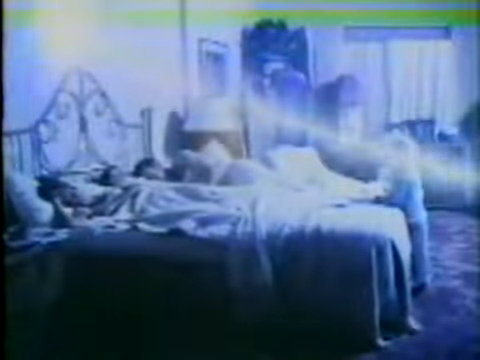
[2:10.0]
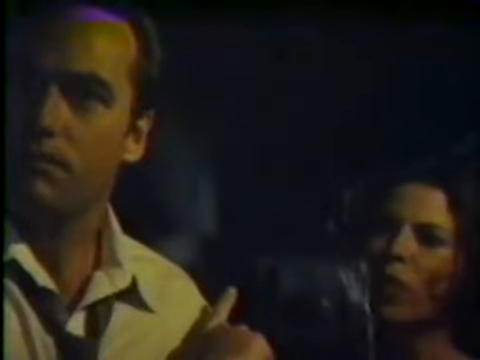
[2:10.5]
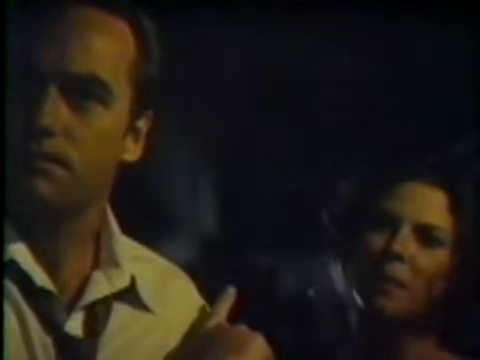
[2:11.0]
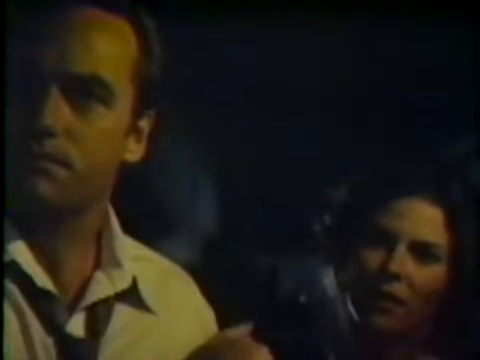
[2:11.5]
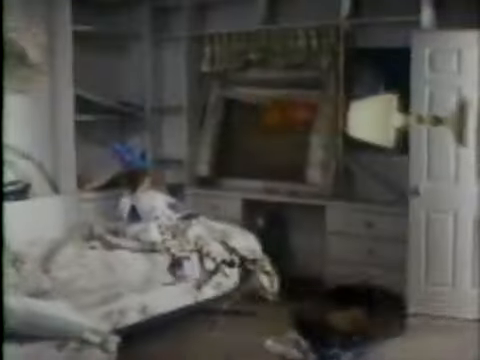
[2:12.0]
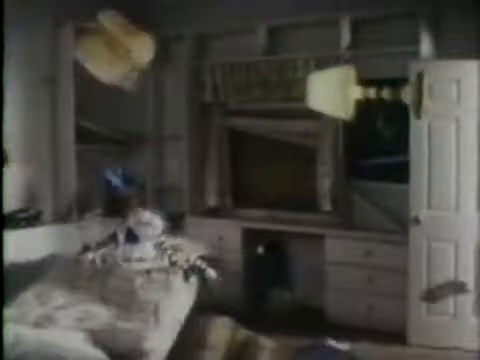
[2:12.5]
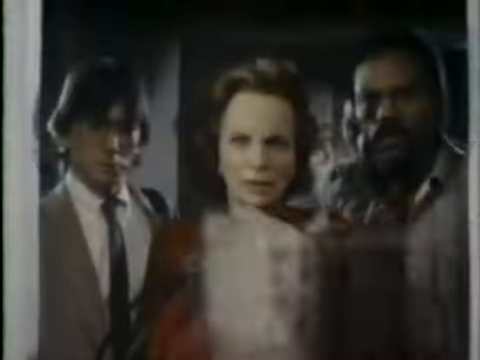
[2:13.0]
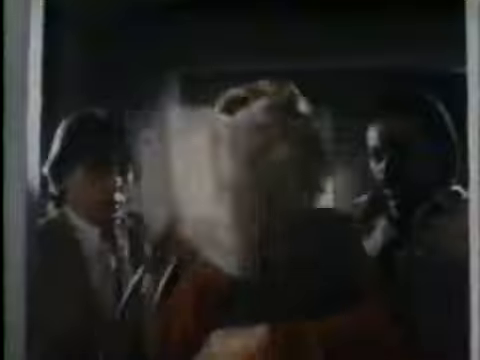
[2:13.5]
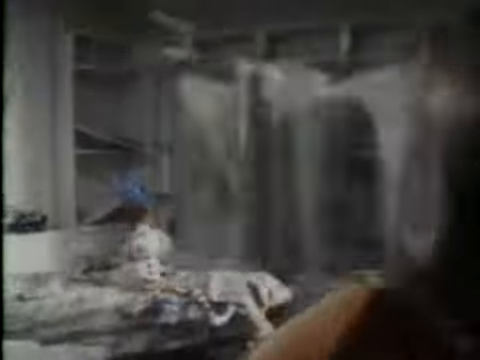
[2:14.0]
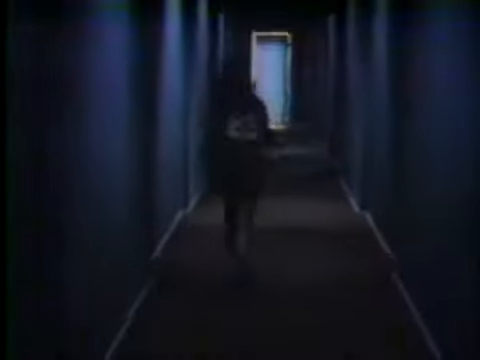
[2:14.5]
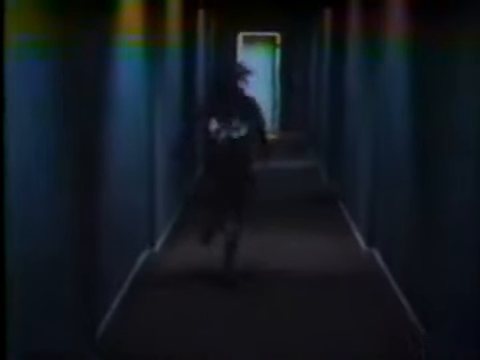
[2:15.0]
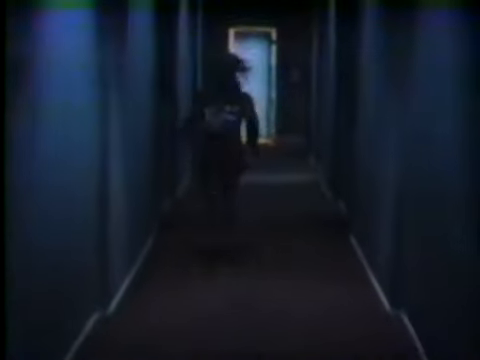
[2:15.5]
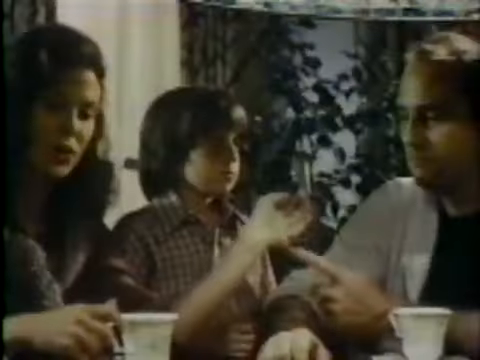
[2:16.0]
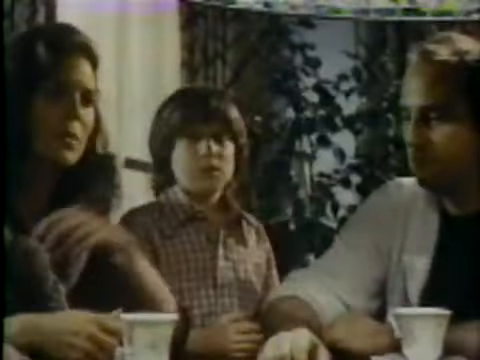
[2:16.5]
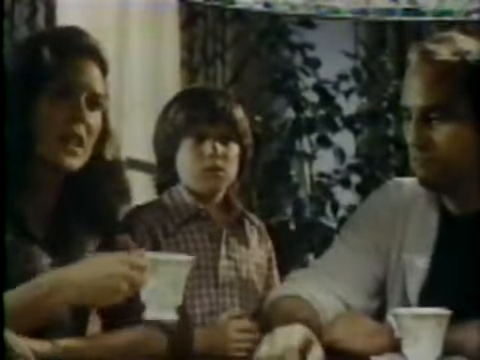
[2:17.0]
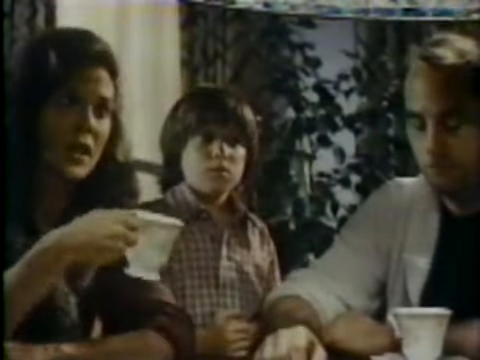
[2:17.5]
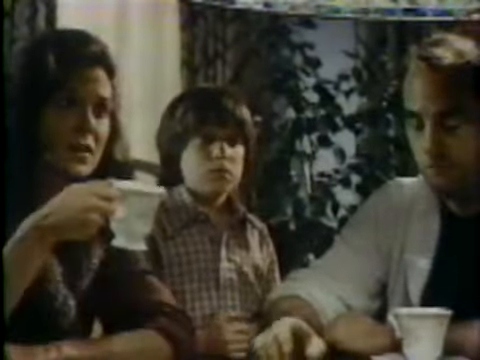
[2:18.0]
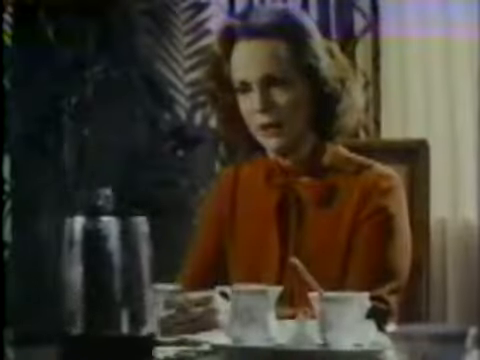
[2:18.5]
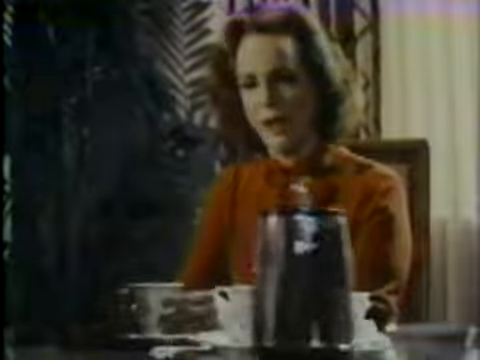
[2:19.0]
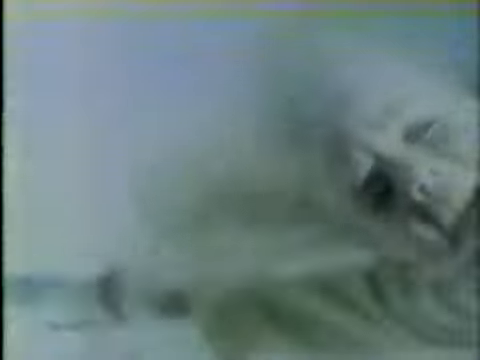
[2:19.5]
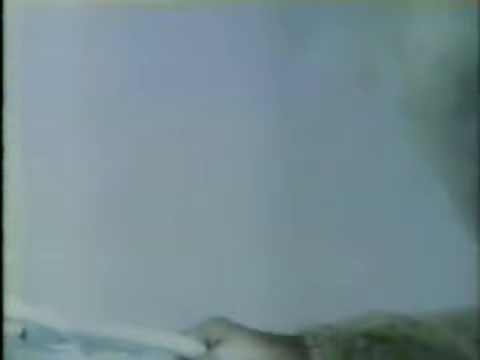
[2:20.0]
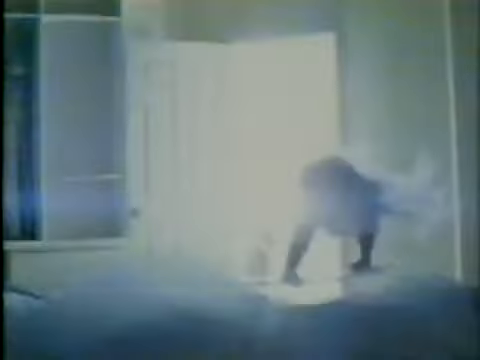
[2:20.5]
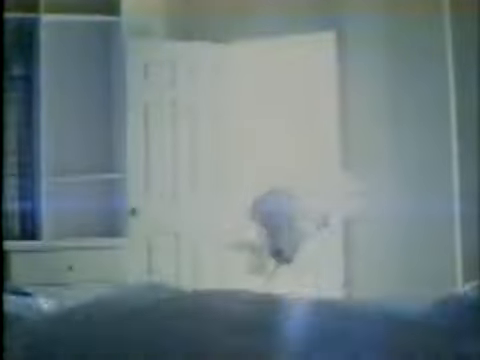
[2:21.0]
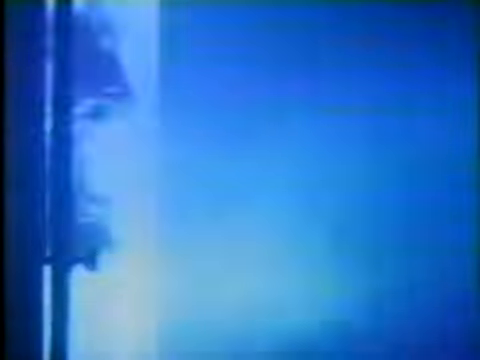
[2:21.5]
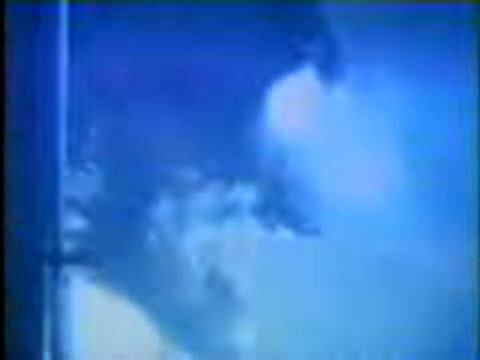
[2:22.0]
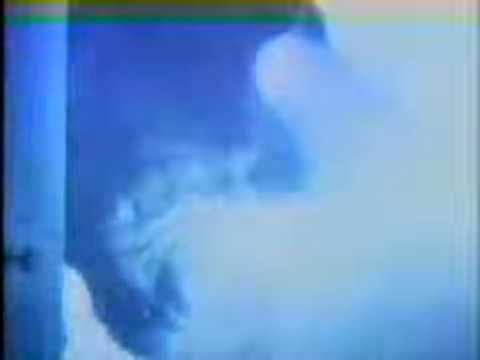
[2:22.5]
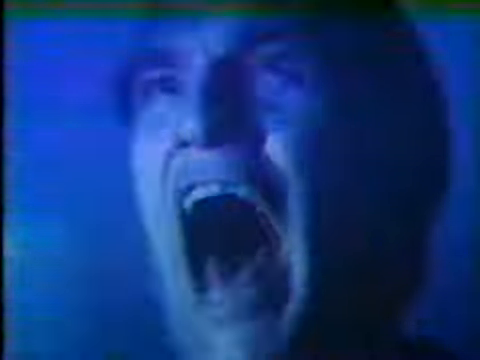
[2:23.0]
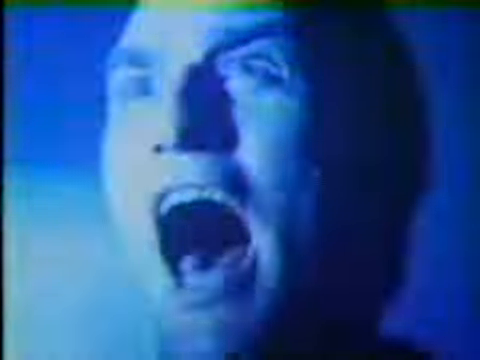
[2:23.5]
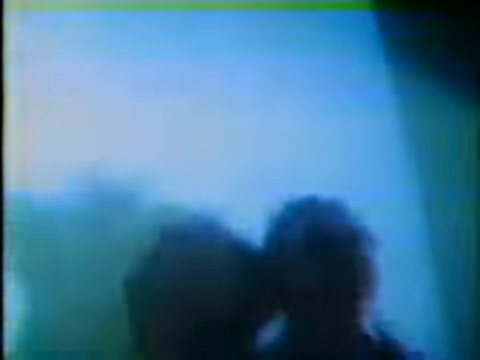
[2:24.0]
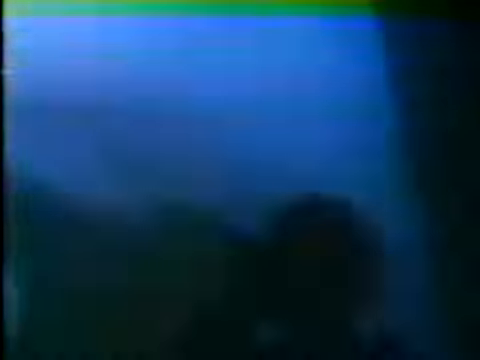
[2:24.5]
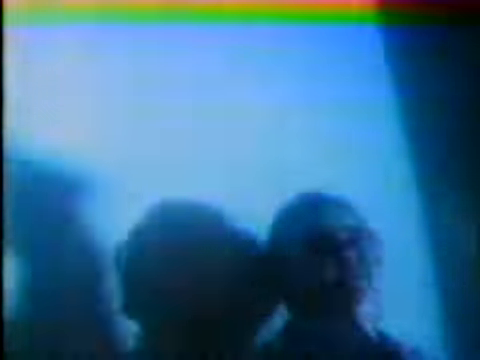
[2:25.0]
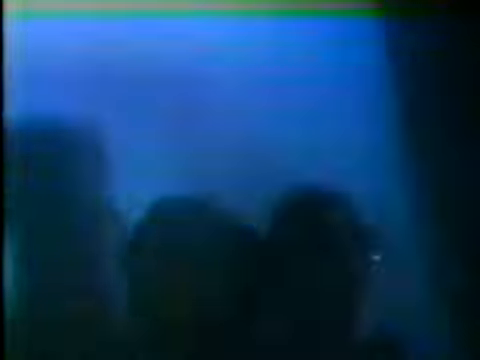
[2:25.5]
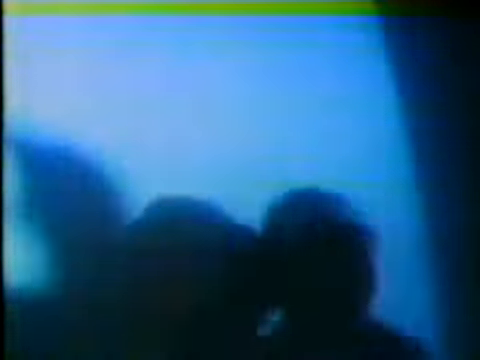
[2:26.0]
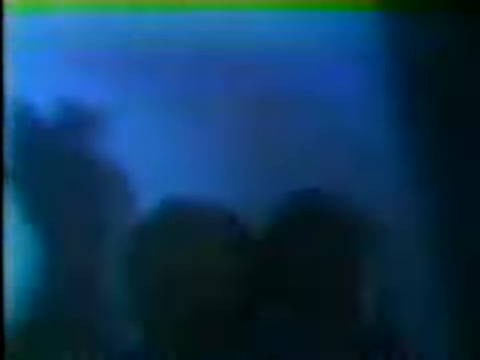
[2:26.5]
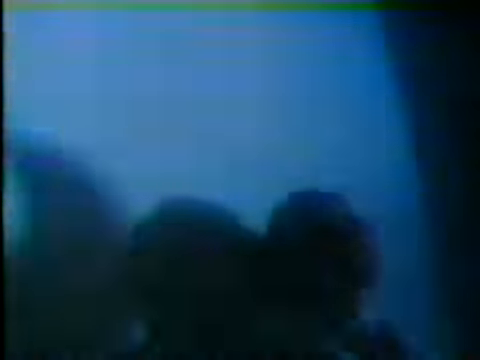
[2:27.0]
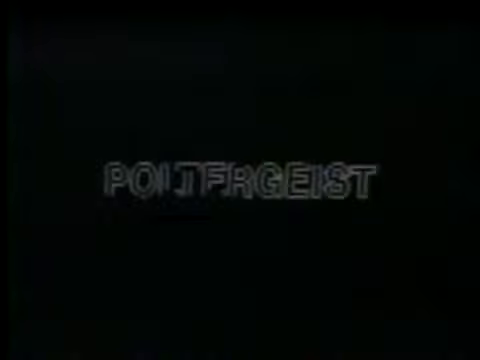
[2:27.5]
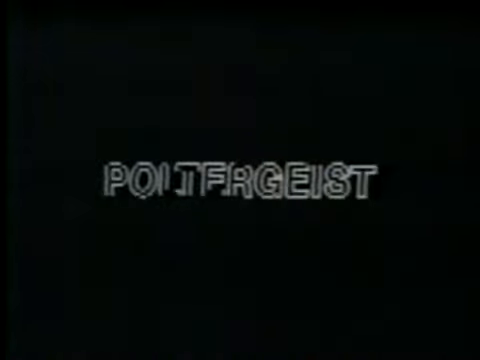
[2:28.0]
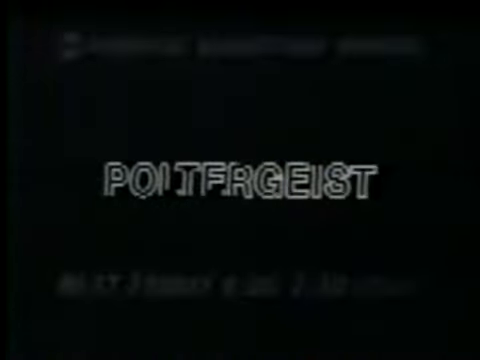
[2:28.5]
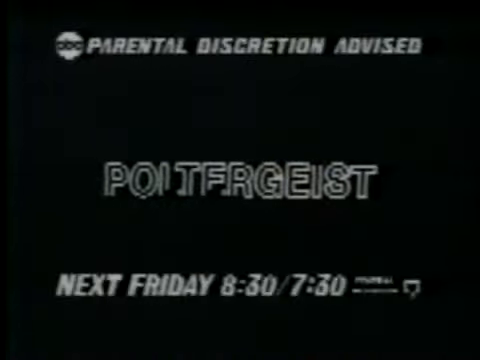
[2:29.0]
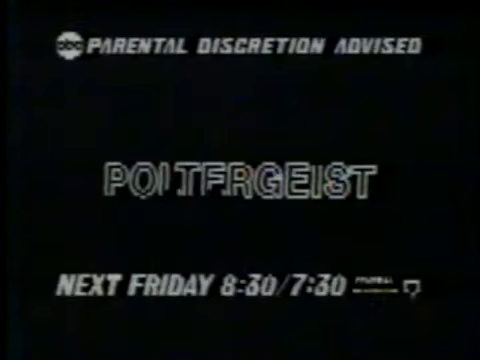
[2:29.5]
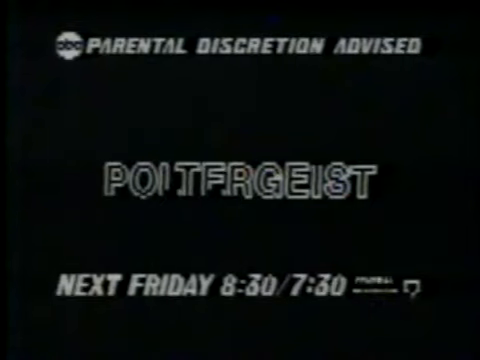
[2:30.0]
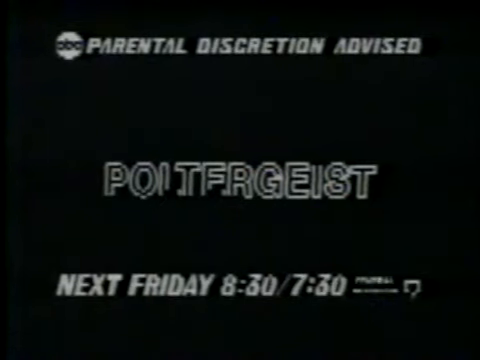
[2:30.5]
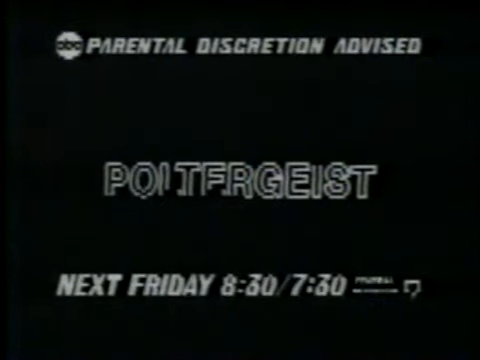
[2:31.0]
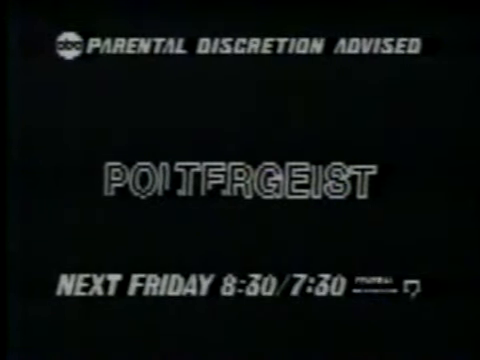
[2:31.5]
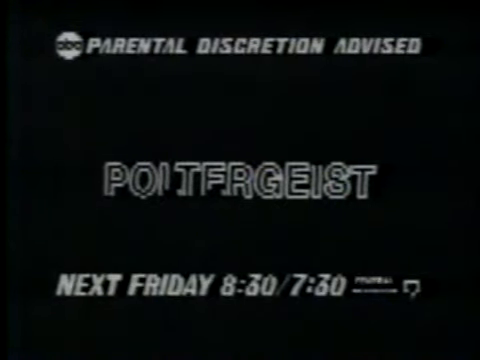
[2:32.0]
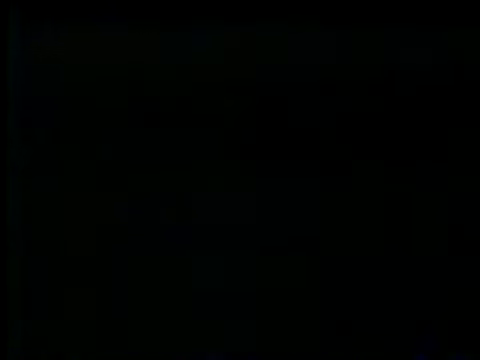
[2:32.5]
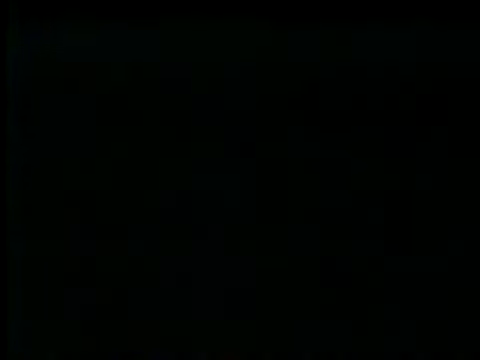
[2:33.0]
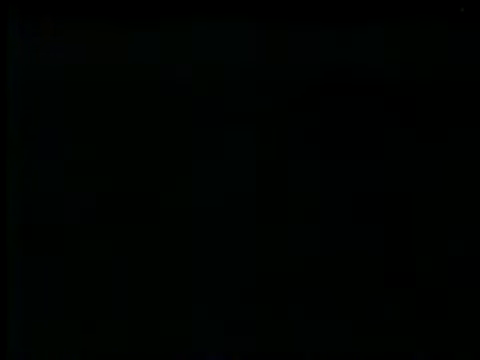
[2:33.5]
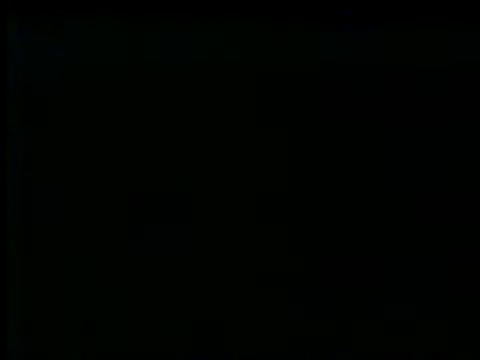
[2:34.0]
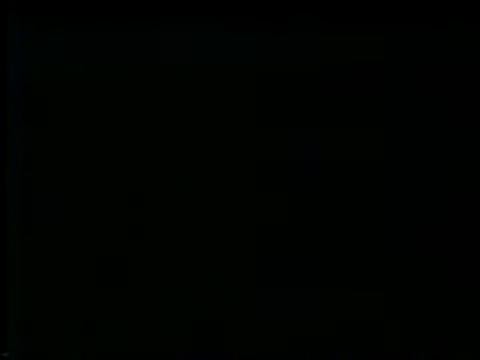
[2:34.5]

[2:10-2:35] Different kinds of weird-looking morphs are shown, which look scary. The morphs fly and move around in the air on their own, with no one visible touching them. People standing on a table eat, and then a cat moves on its own without anyone touching it.